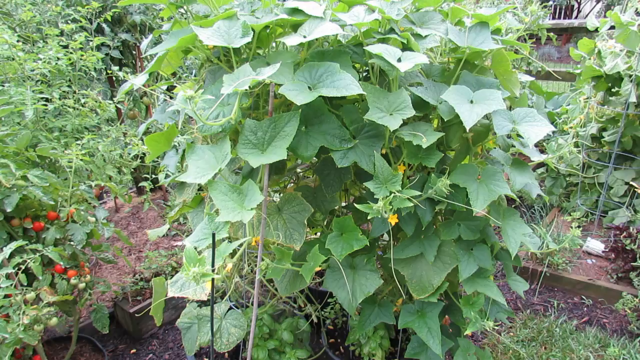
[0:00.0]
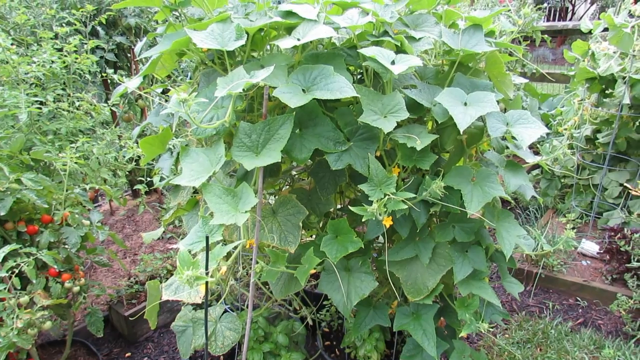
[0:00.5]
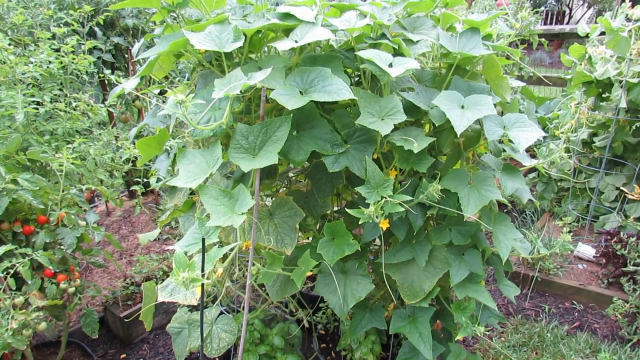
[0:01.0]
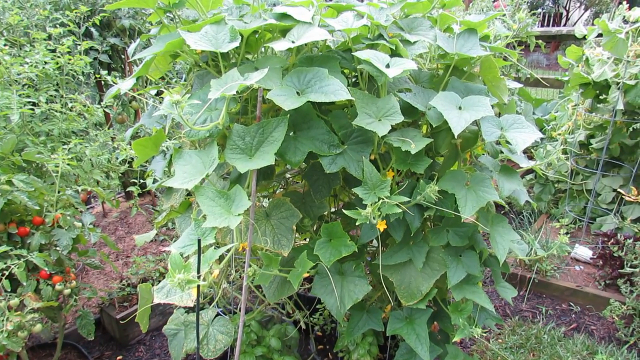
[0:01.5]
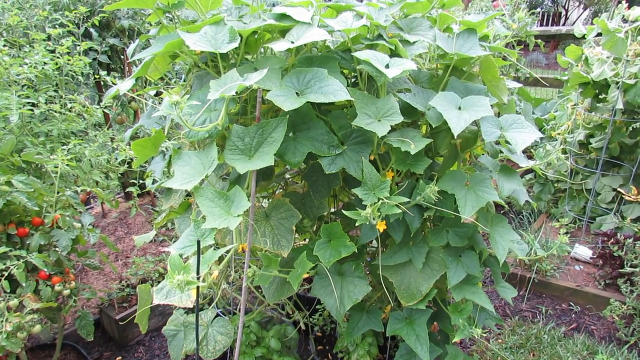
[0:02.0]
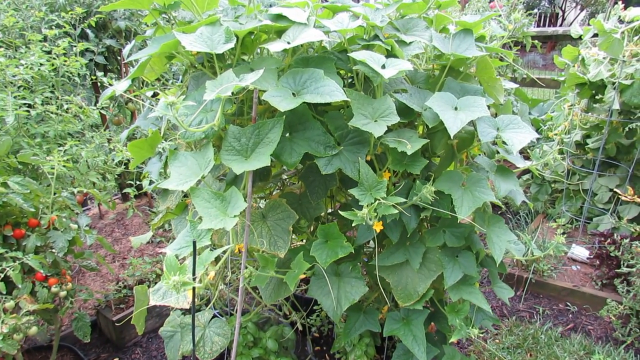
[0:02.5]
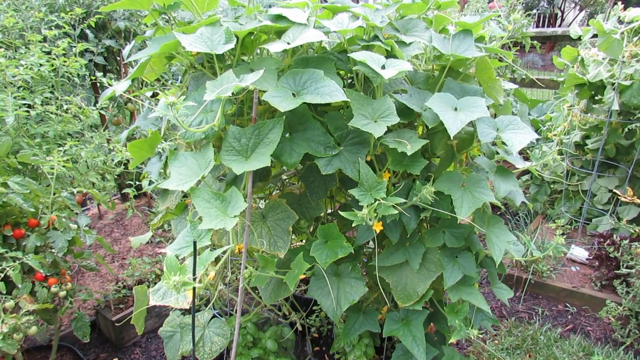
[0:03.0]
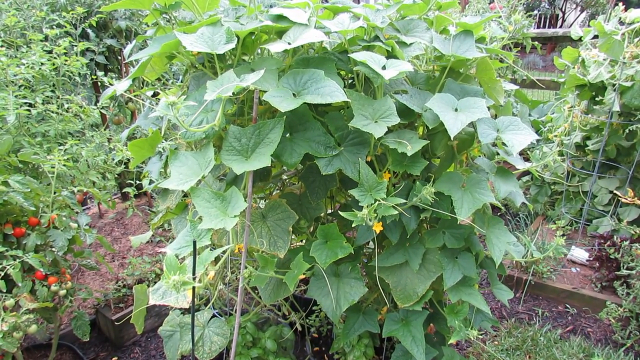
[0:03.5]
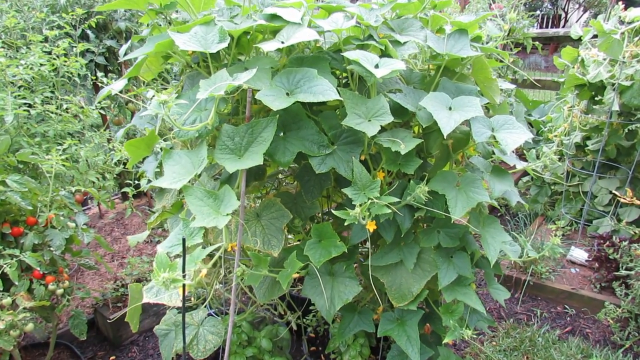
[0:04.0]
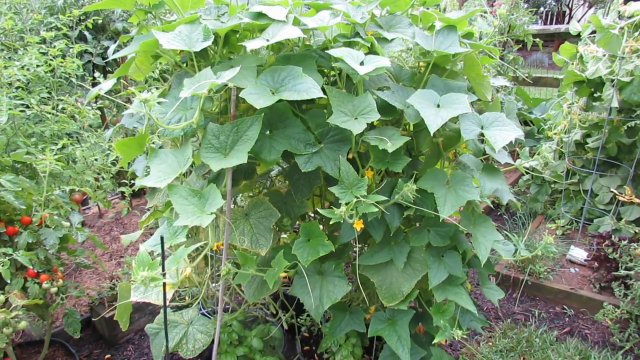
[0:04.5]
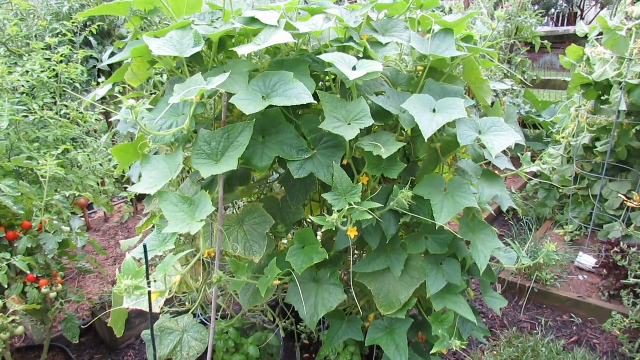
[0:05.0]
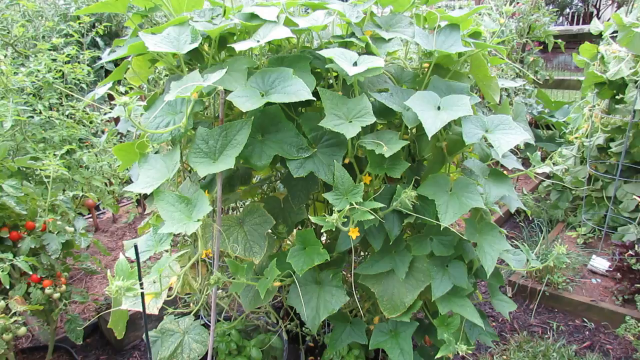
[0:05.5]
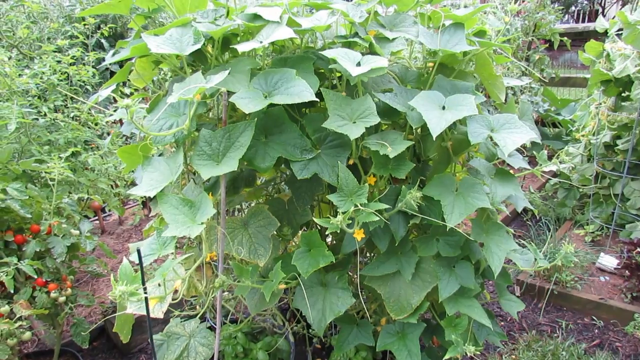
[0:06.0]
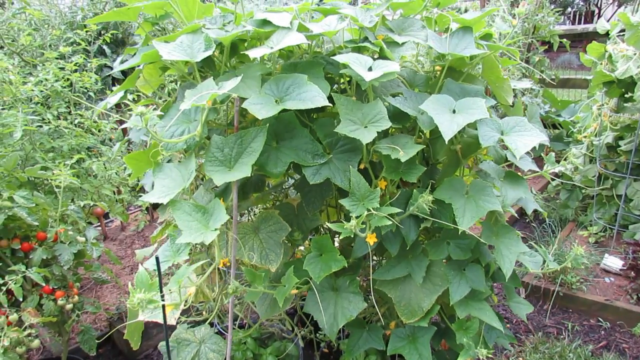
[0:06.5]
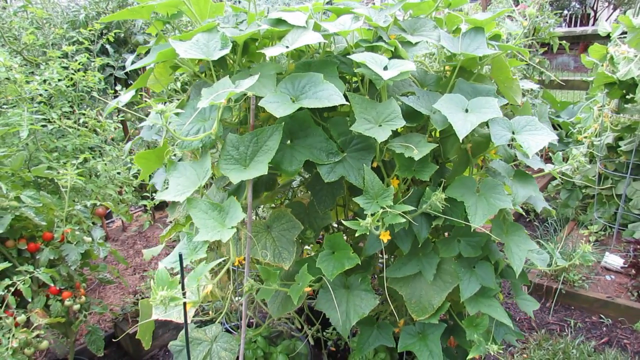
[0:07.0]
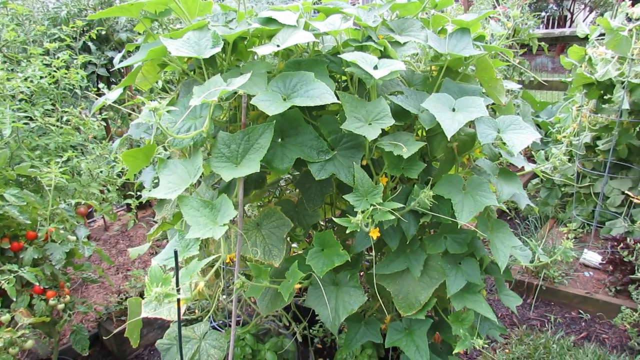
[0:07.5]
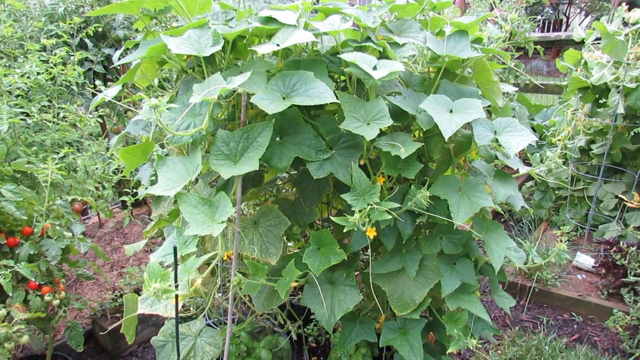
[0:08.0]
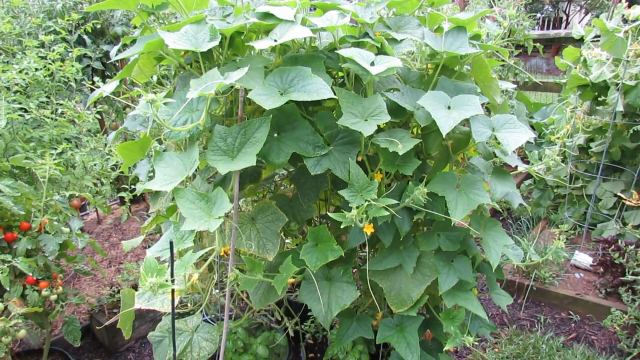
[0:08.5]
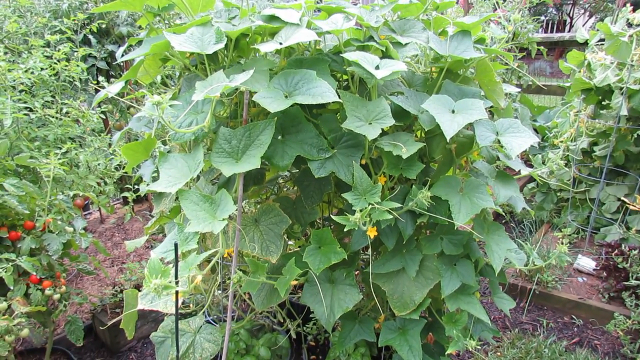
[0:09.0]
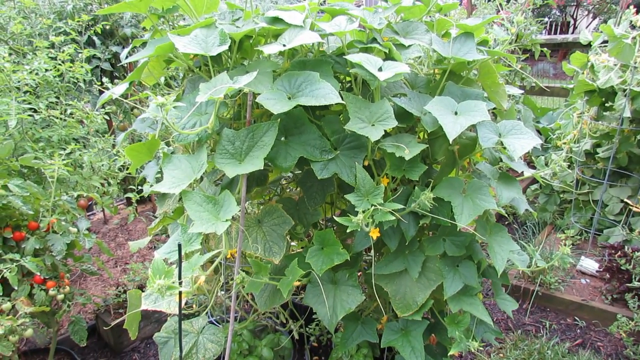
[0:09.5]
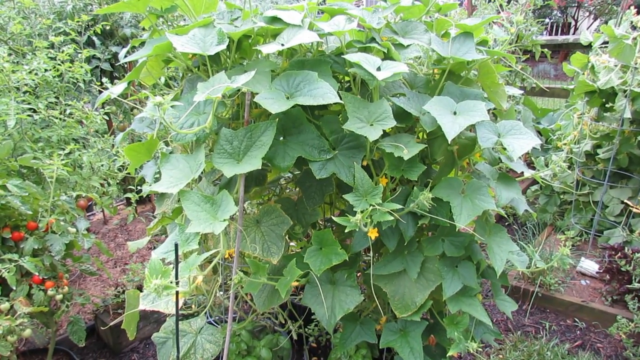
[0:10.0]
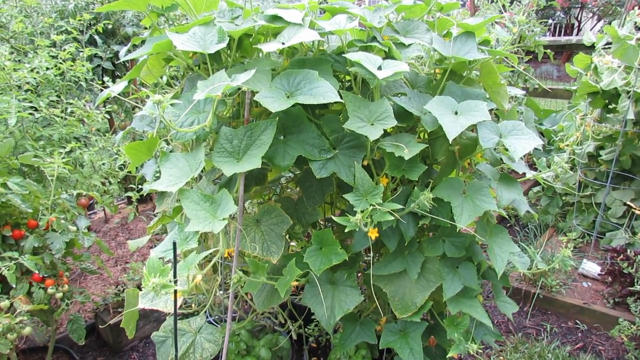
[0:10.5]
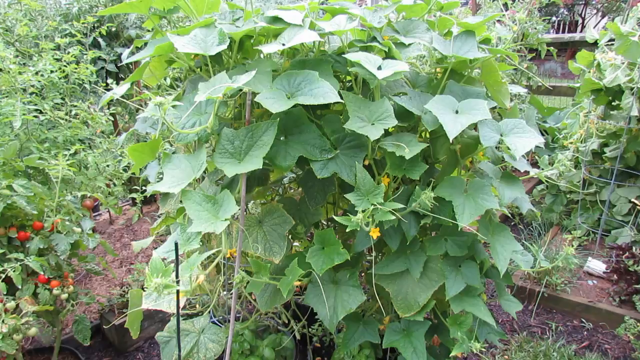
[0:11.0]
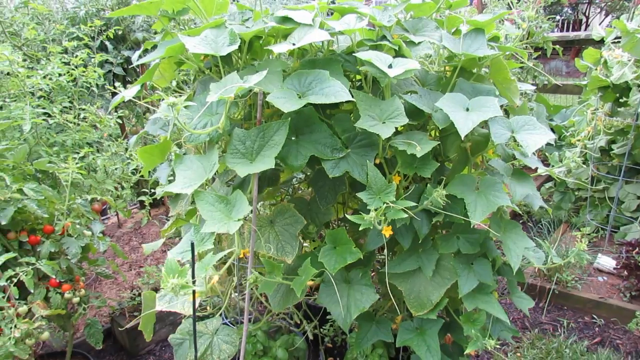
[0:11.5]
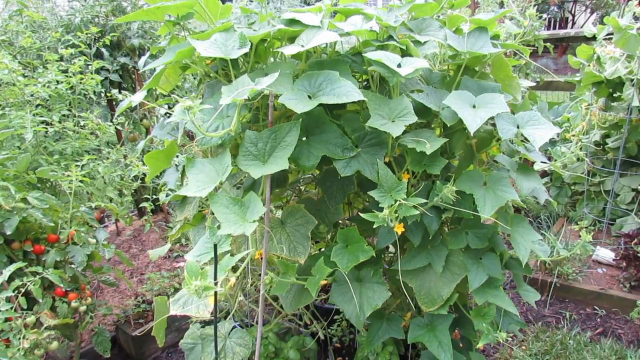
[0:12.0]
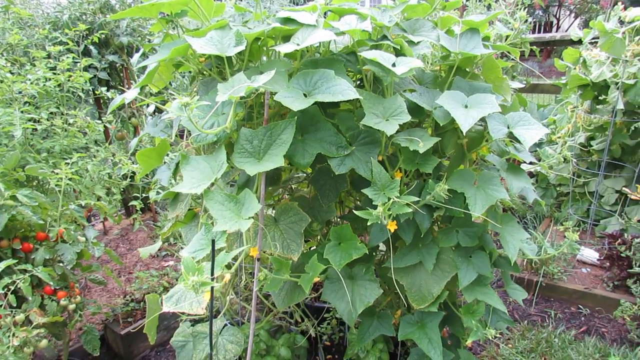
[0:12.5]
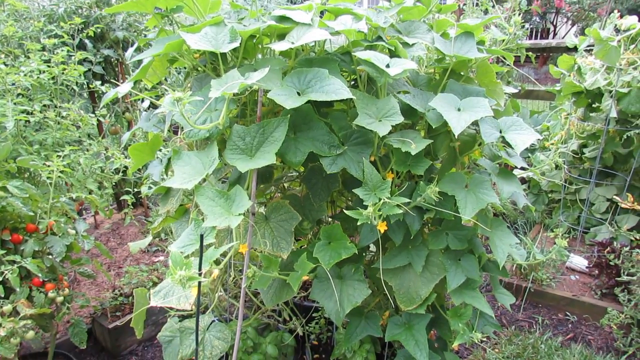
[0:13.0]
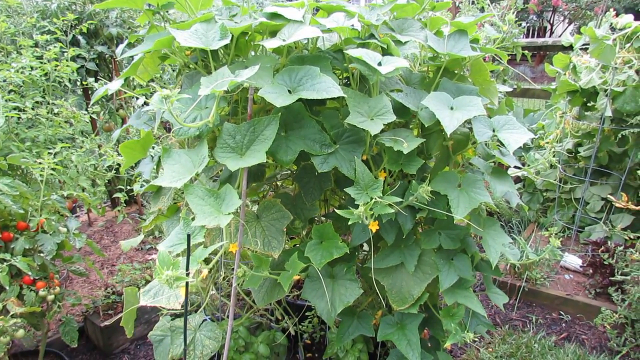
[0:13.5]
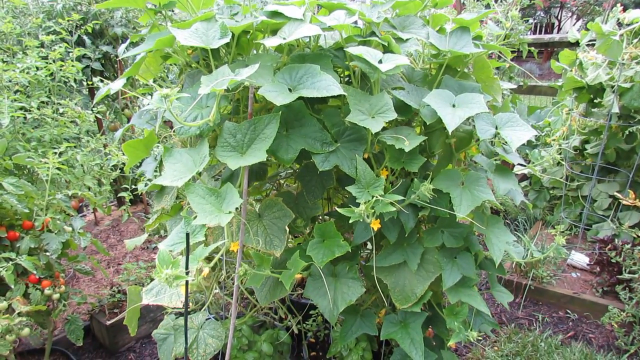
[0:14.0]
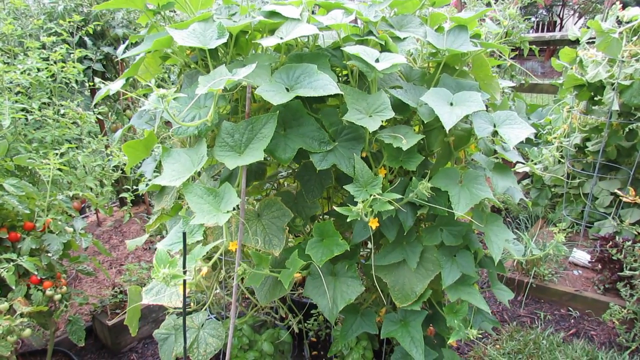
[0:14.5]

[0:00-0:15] An outdoor area, possibly a garden, is shown as the camera moves a little around a particular bush in the middle. The bush has lots of green leaves and a few small yellow flowers that appear to be in bloom, and a bit of the stems is visible. What looks like a bumblebee flies in the lower left part of the big bush. Other foliage and greenery fill the background. On the left is some kind of tree bearing red tomatoes or some other red fruit, round red balls that are in bloom. A few trellis objects enable the plants to grow upwards. Some dirt is visible along the ground, and in the top right corner a little of some kind of structure, either a house or a gate, can just be made out.